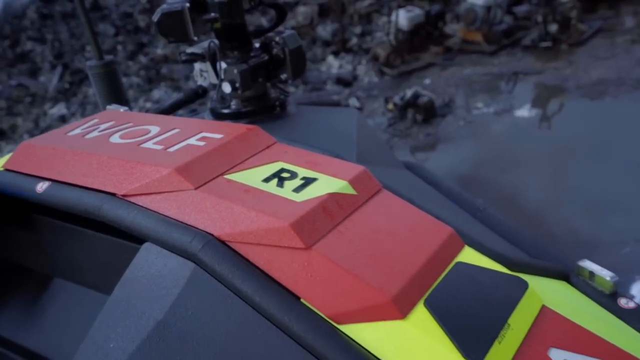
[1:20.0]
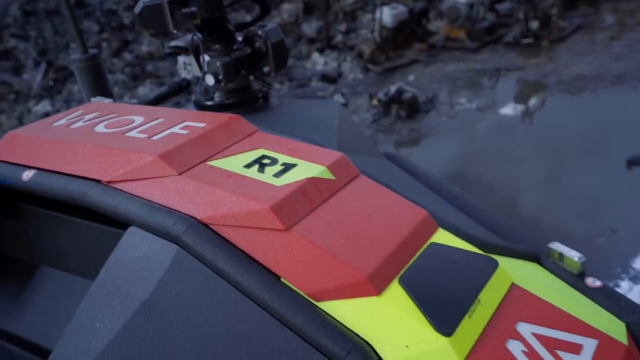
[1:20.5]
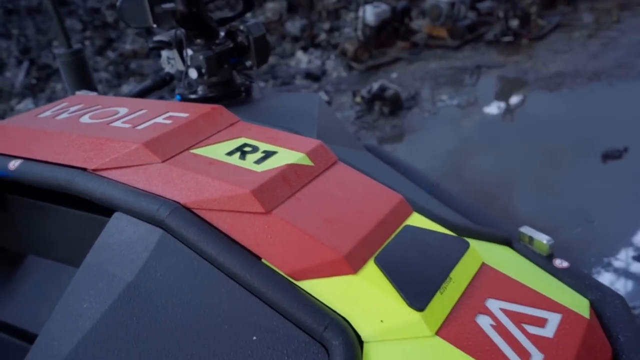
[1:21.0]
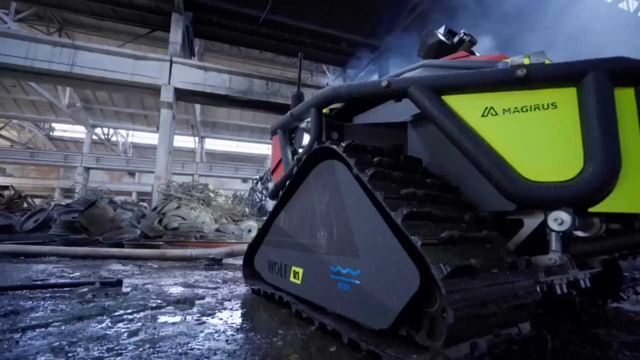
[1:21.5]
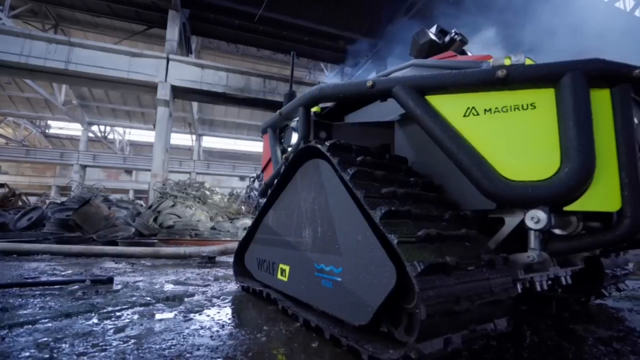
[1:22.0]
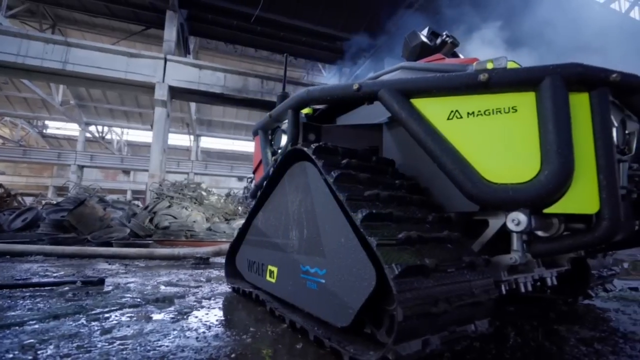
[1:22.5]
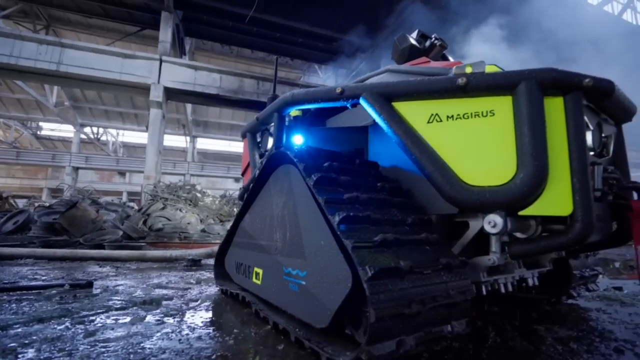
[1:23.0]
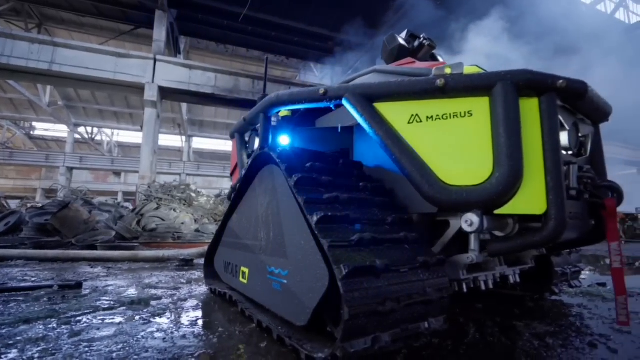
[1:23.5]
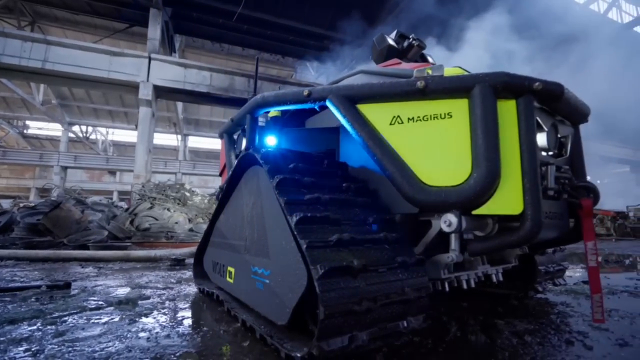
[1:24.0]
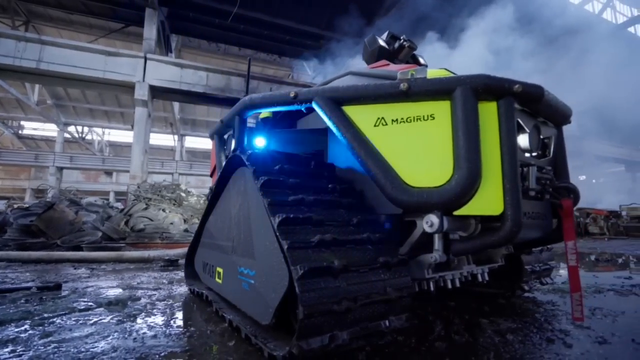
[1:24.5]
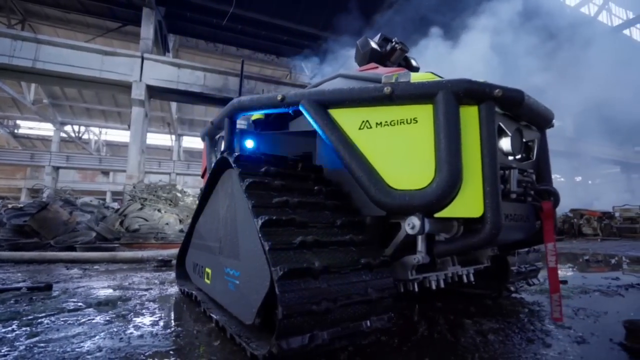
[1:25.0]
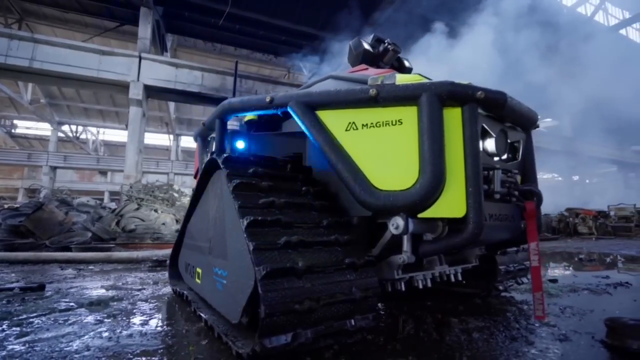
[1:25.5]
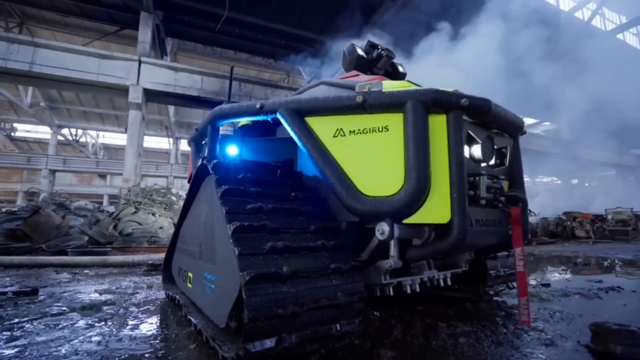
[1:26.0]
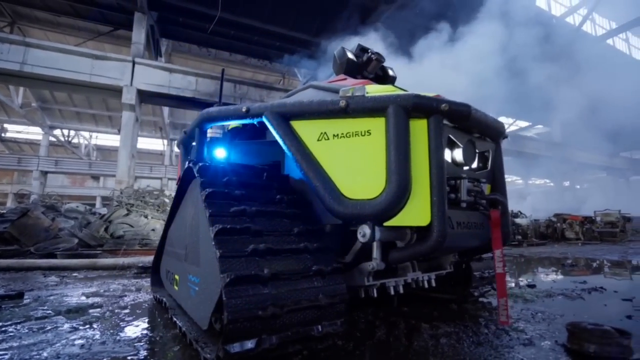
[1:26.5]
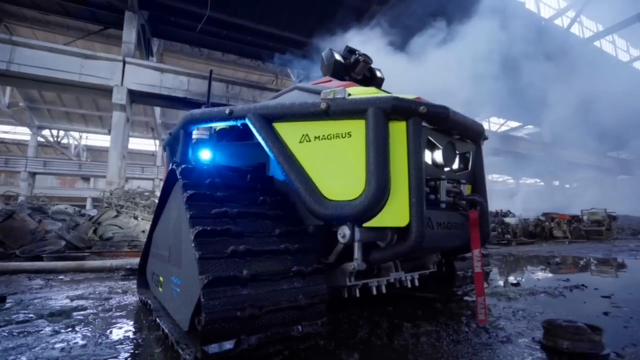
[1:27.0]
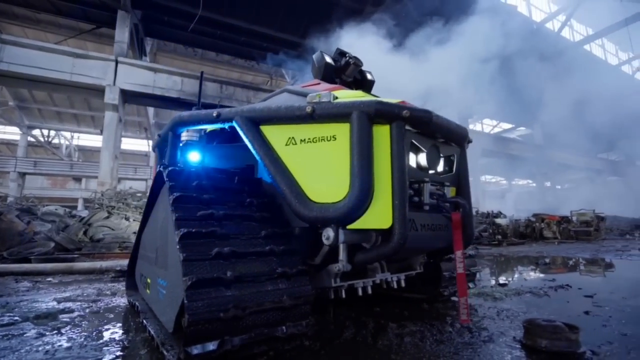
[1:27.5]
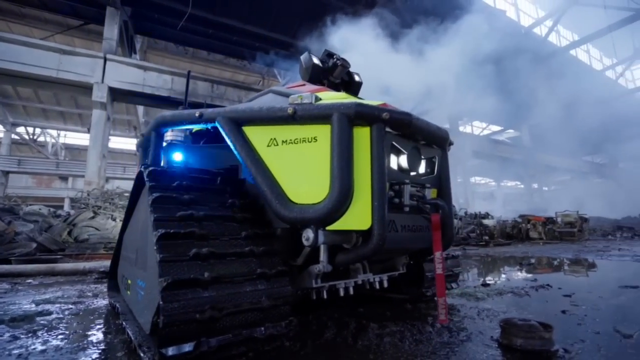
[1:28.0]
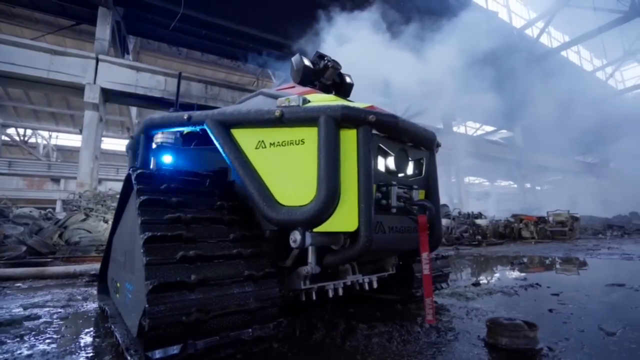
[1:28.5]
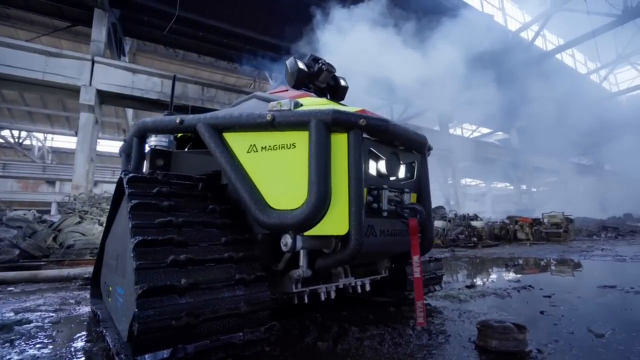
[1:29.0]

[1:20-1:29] The Wolf-branded fire vehicle fills the screen in what seems to be a close shot, and the camera appears to focus on it. Part of the vehicle is neon green or yellowish green.